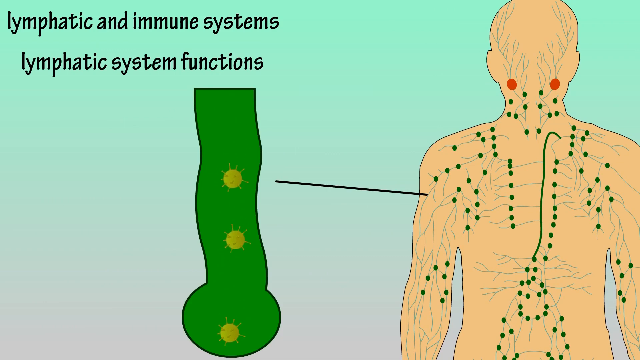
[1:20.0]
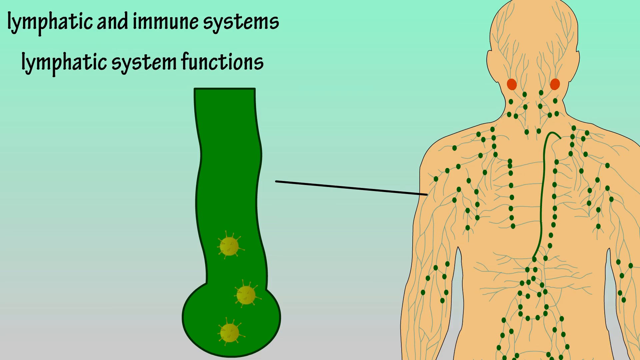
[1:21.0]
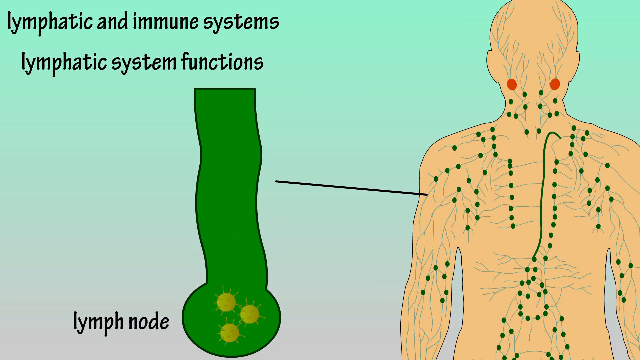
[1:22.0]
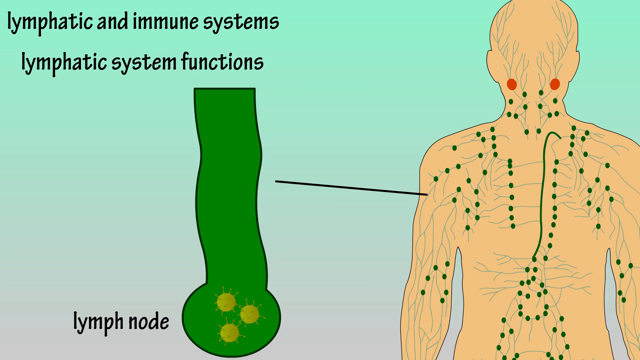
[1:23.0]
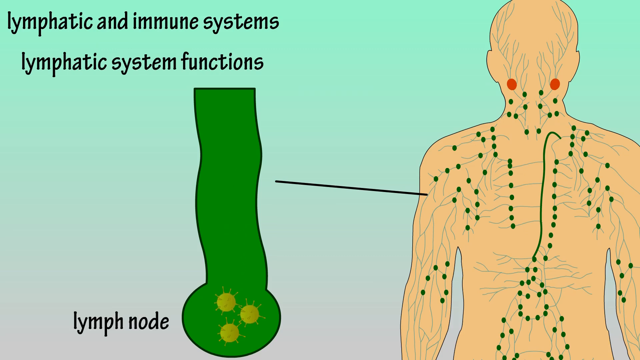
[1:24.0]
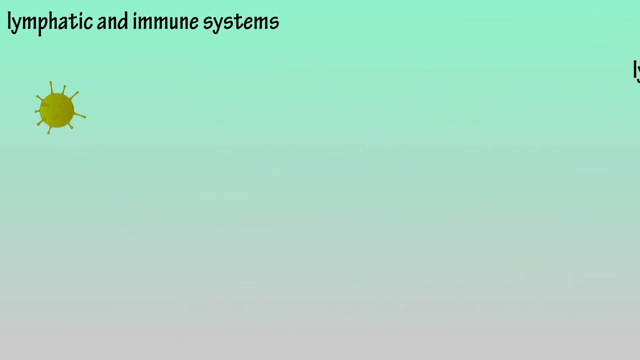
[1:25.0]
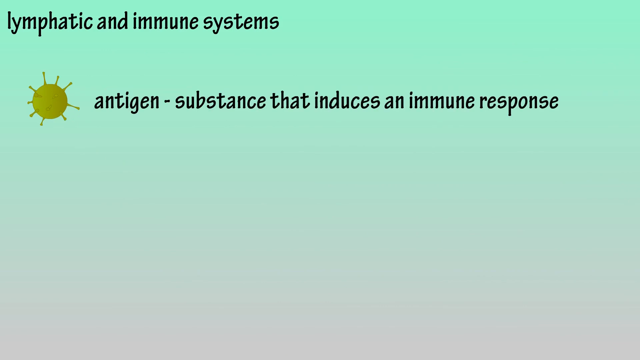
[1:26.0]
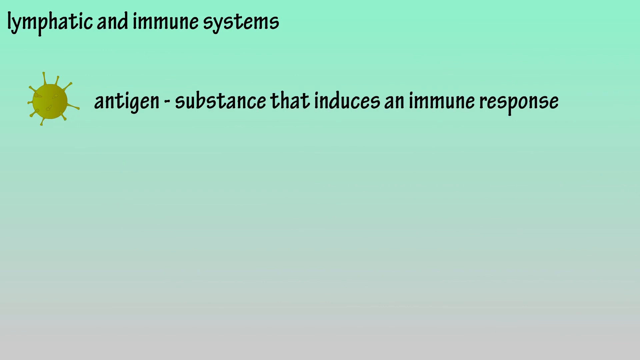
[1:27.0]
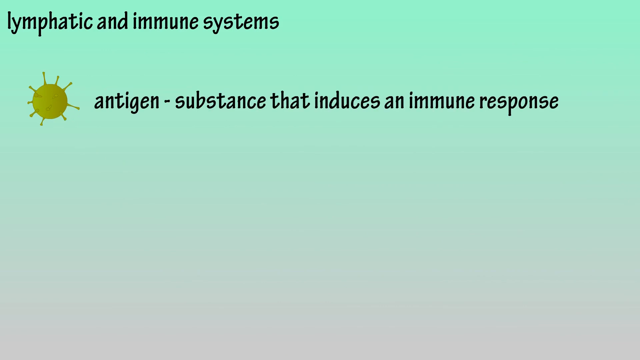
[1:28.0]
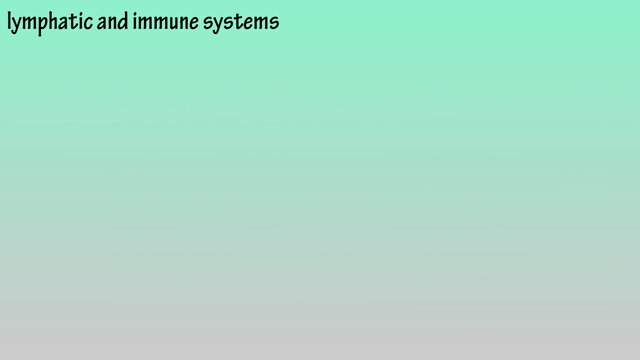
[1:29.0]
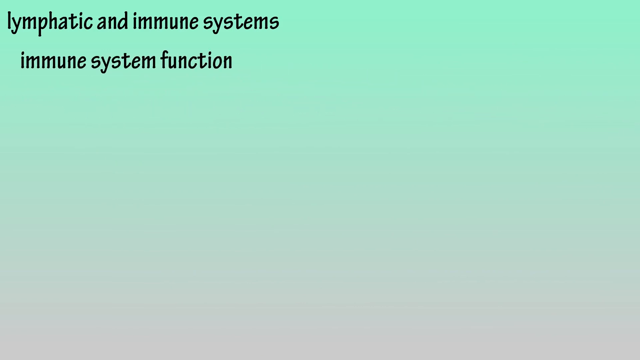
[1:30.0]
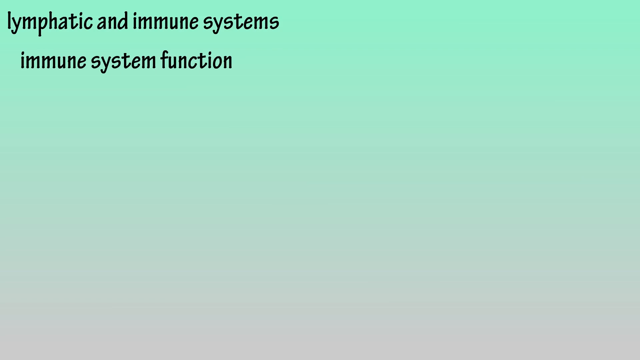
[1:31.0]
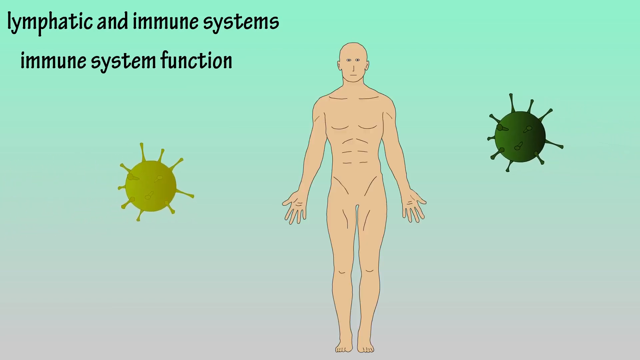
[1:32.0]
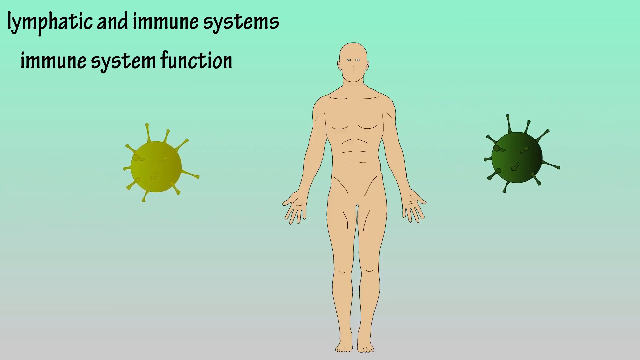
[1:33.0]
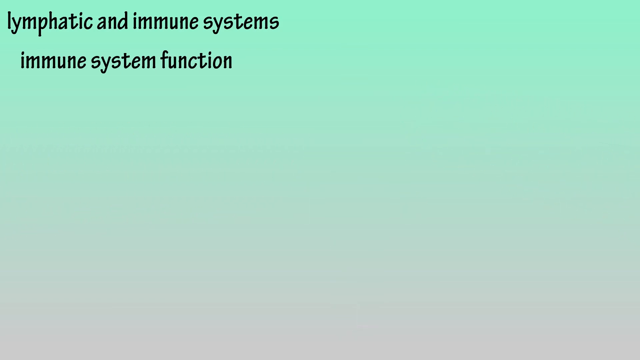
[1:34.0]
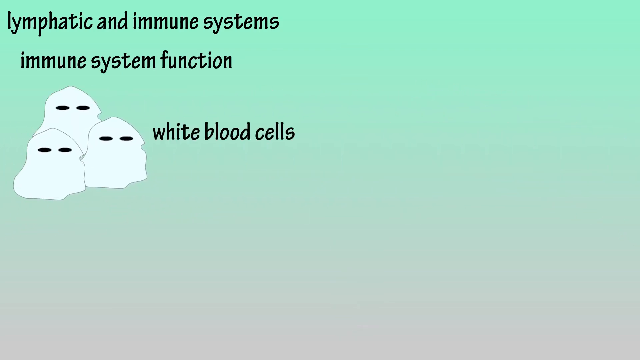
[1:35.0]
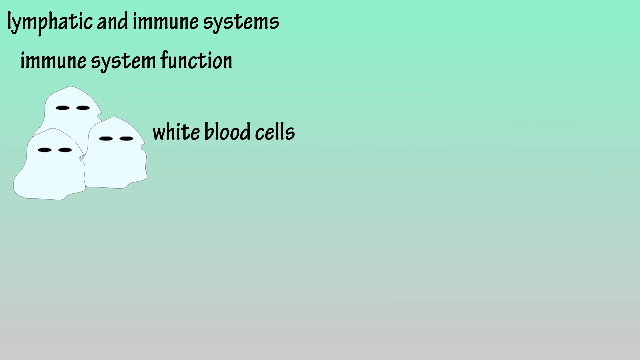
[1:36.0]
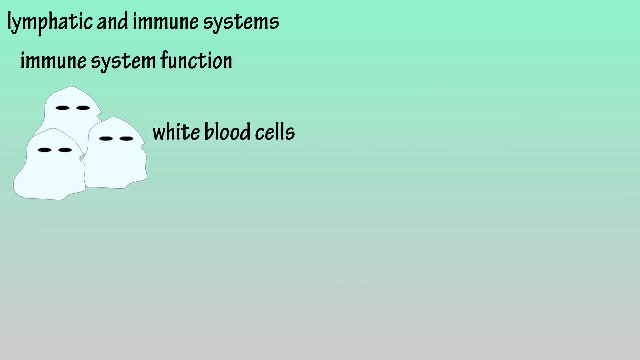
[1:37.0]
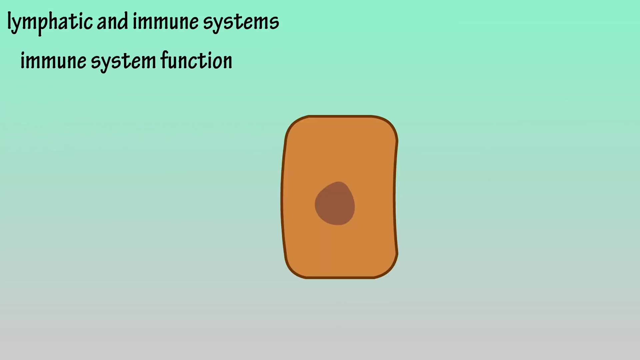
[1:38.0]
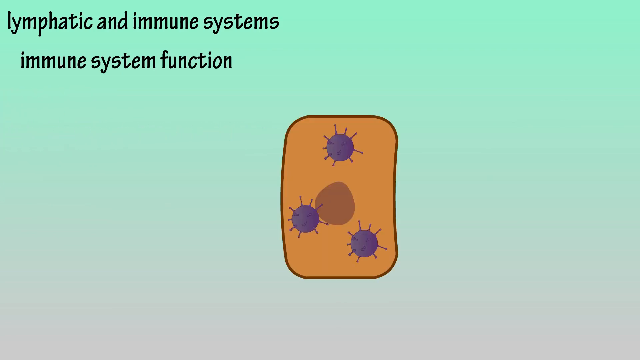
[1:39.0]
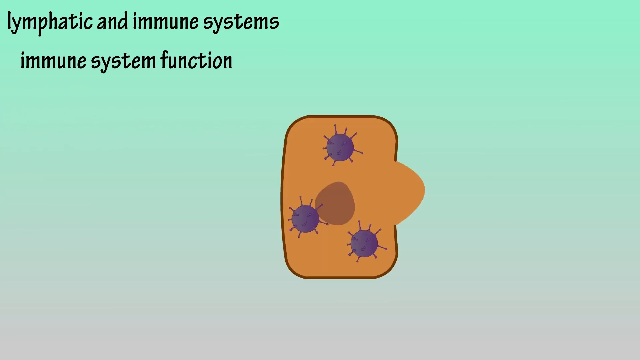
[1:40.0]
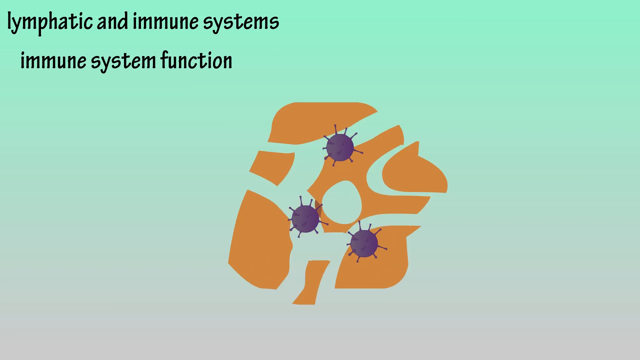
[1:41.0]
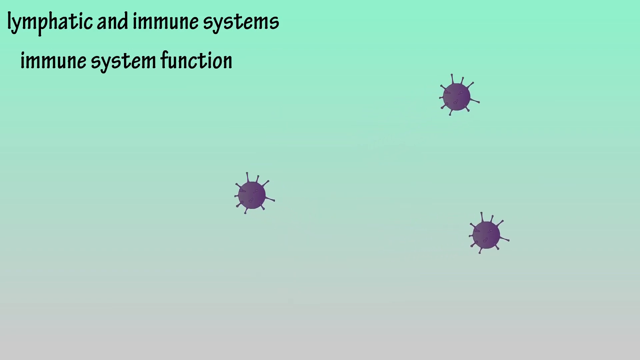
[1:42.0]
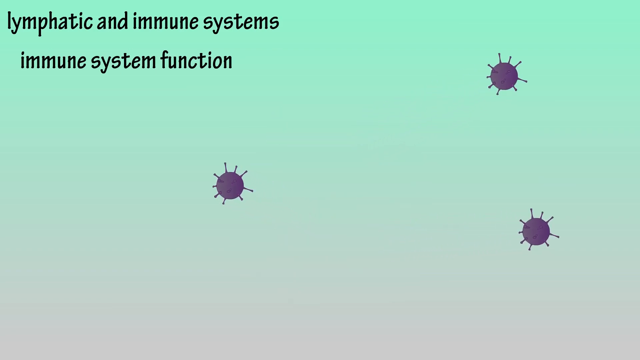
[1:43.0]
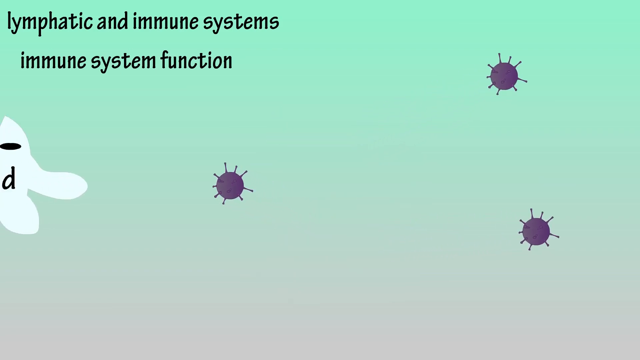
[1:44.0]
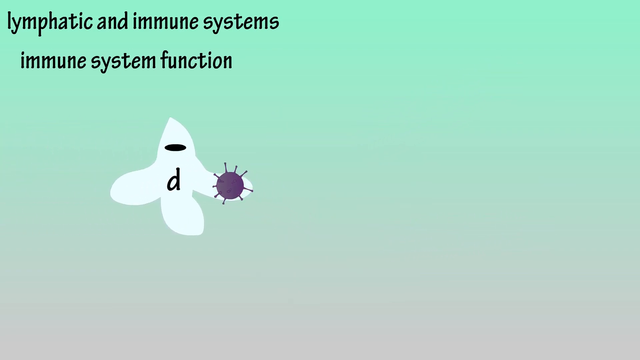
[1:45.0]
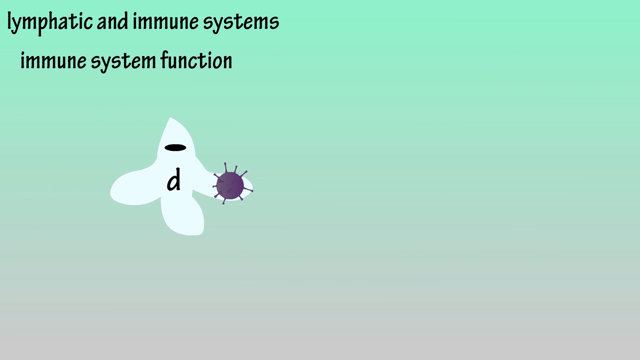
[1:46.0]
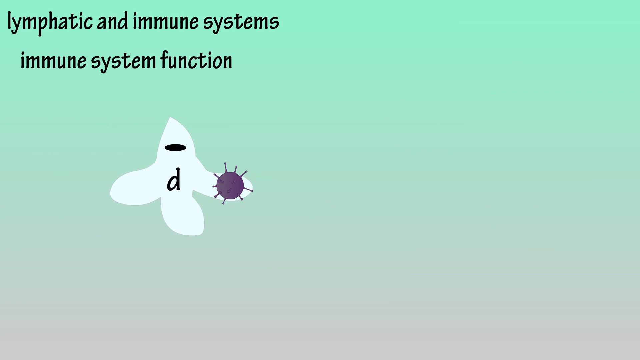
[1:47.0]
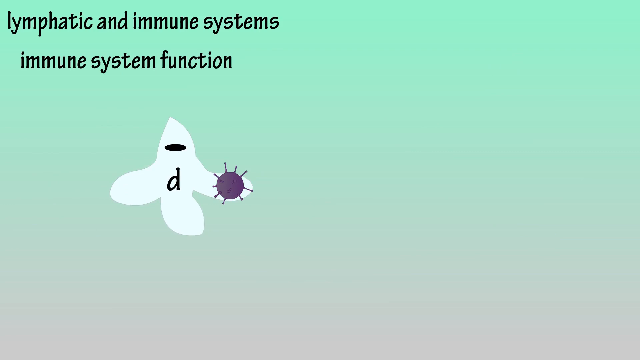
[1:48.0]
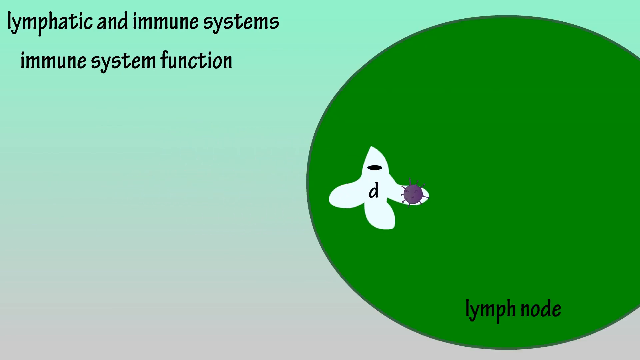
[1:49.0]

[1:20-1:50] The whole body is shown with the lymph vessels and other parts. Two bacteria go down the lymph vessel to what is called a lymph node. An explanation of the bacteria follows: next to the image is the text "antigen substance that induces an immune response". This disappears, and the video goes to immune system function, showing a whole human body, now without the vessels, just a naked person, with a few bacteria bouncing off the body. An image of three white blood cells appears. Then something that looks like skin appears with three purple bacteria inside it, apparently breaking it down. A white blood cell with the letter D comes in, takes one of the bacteria into its hand, and goes with it toward the lymph node.